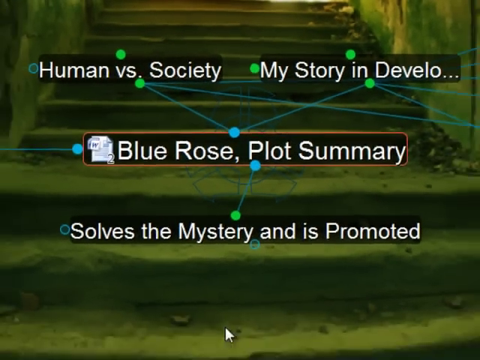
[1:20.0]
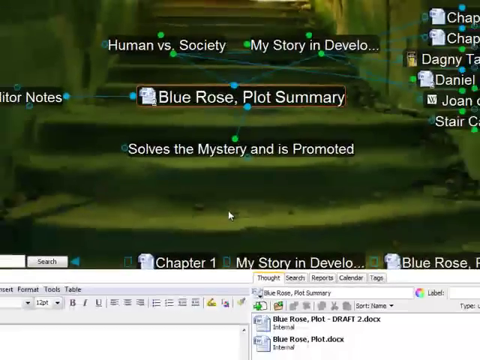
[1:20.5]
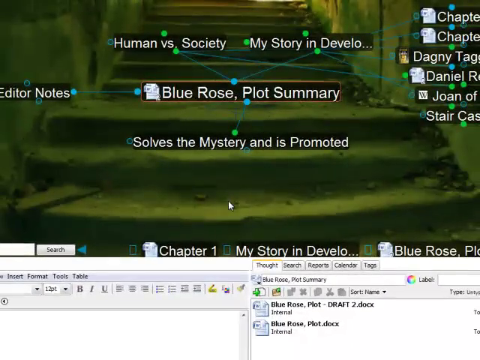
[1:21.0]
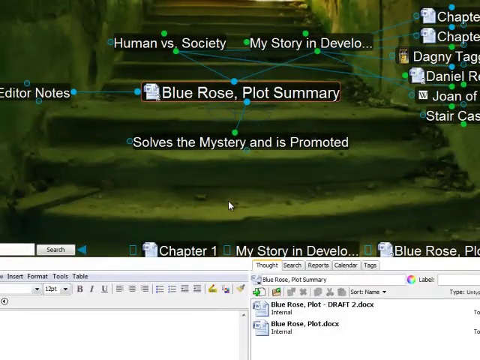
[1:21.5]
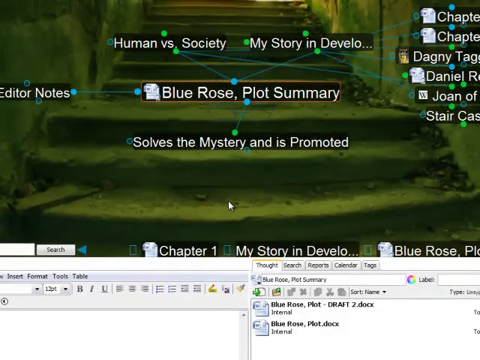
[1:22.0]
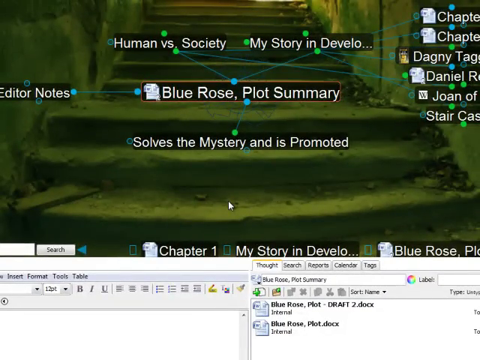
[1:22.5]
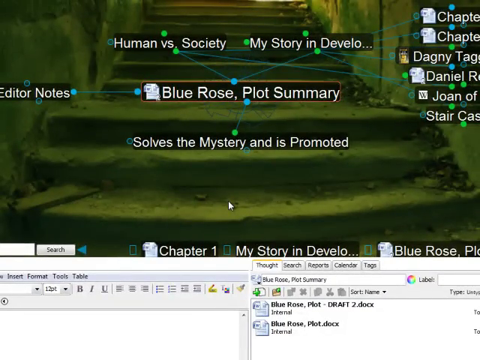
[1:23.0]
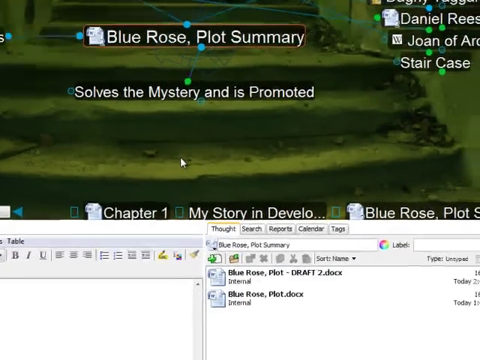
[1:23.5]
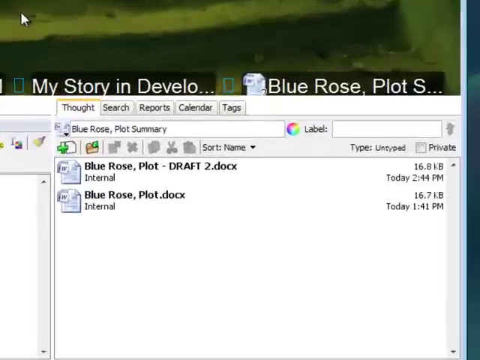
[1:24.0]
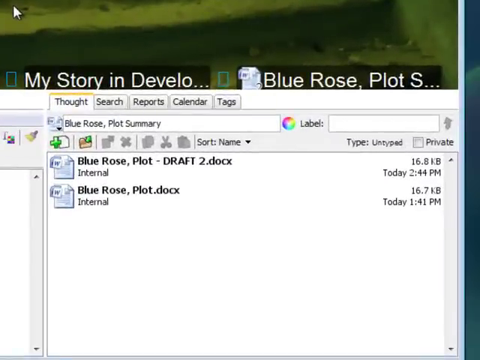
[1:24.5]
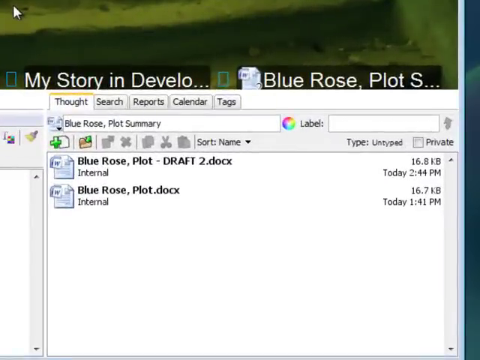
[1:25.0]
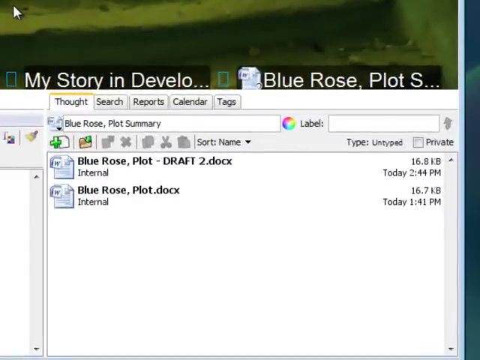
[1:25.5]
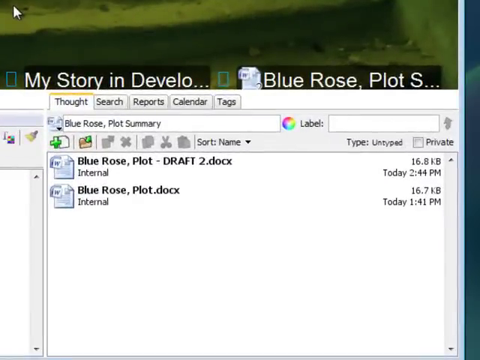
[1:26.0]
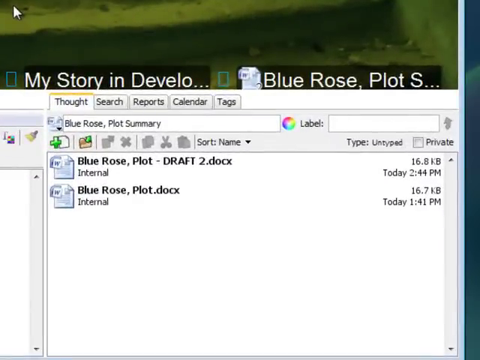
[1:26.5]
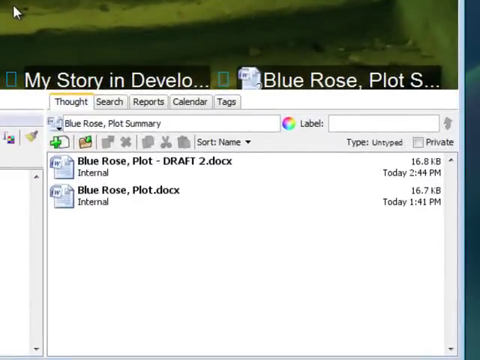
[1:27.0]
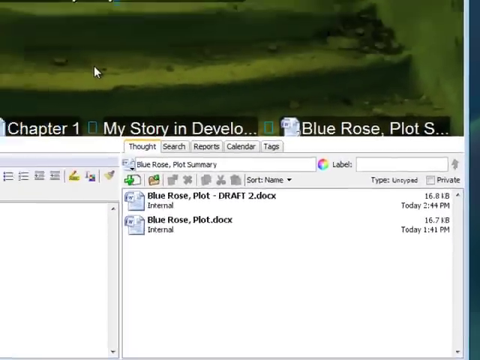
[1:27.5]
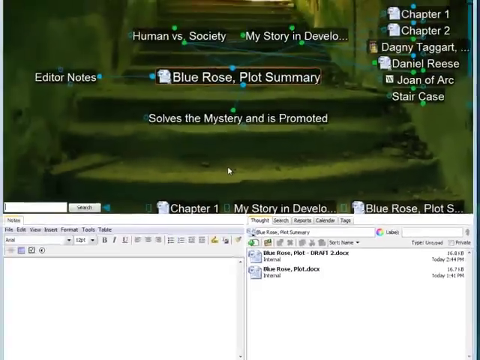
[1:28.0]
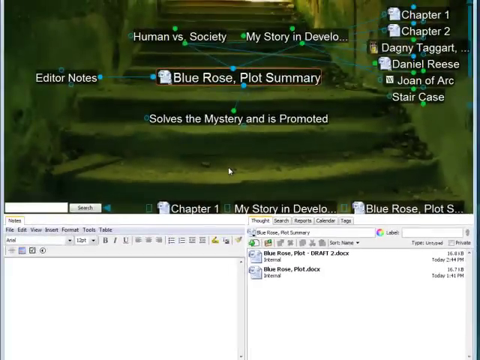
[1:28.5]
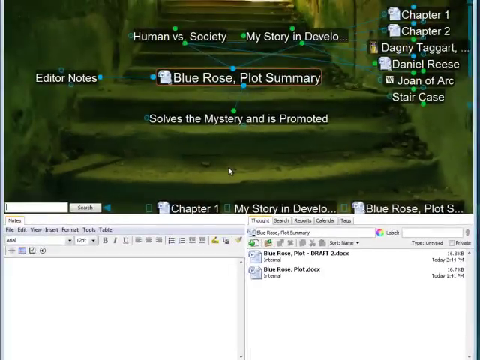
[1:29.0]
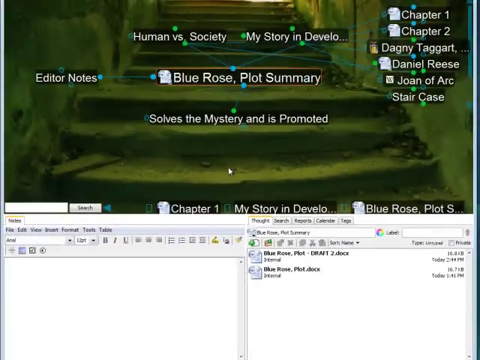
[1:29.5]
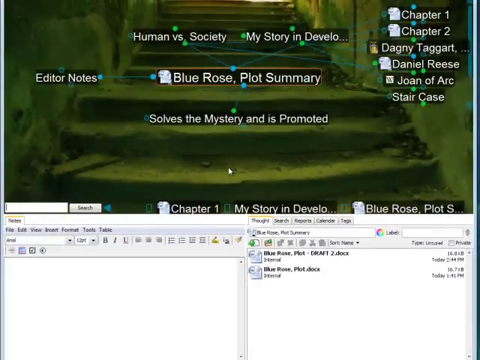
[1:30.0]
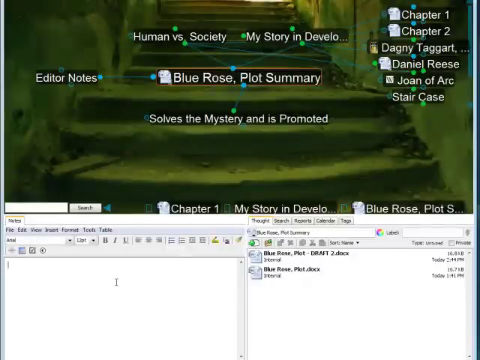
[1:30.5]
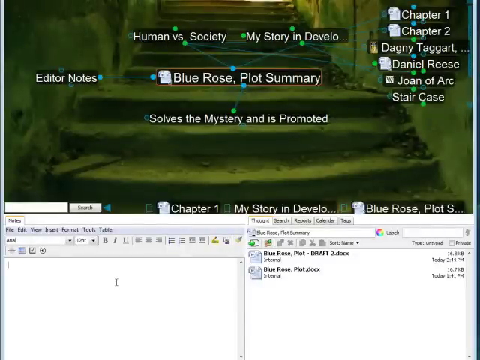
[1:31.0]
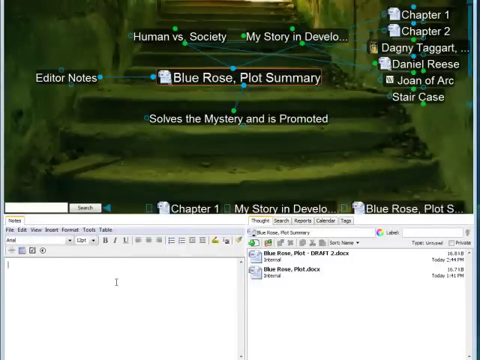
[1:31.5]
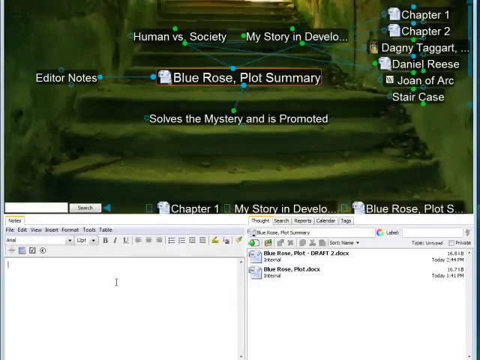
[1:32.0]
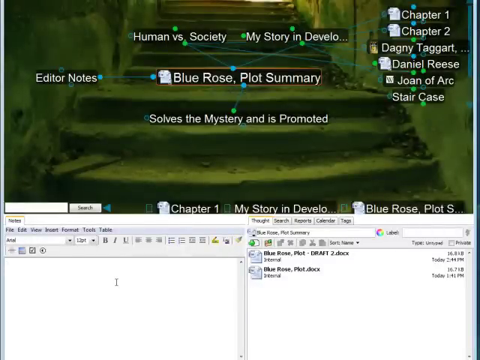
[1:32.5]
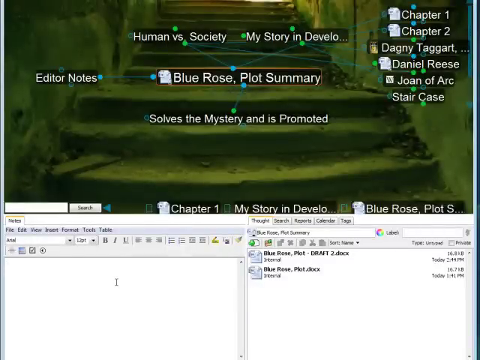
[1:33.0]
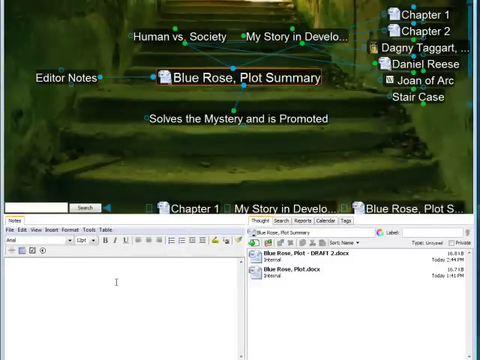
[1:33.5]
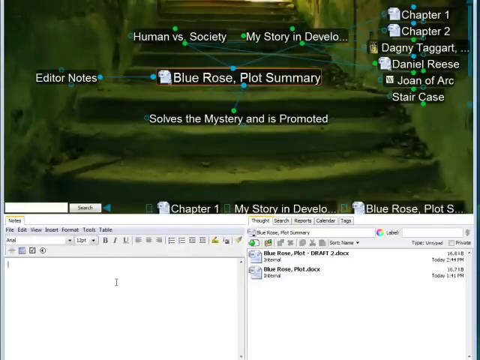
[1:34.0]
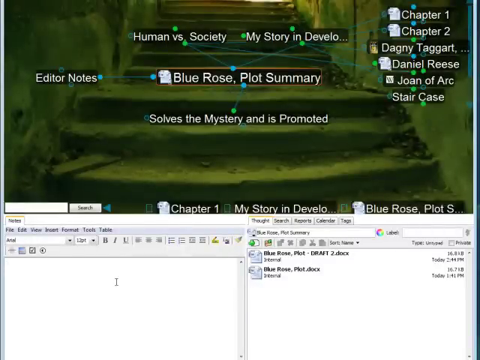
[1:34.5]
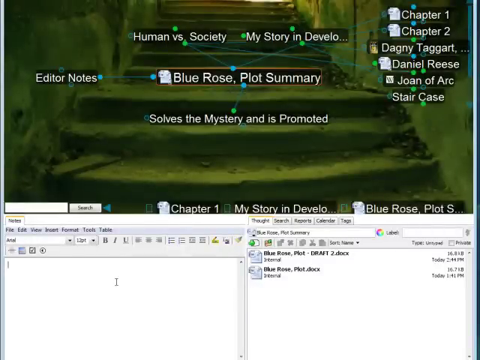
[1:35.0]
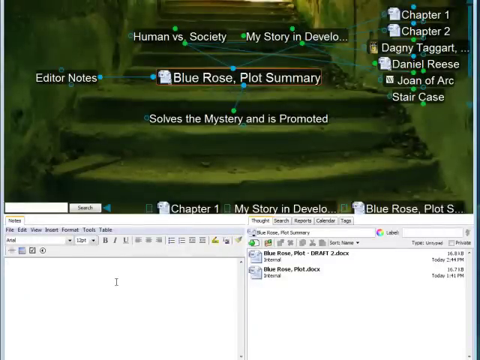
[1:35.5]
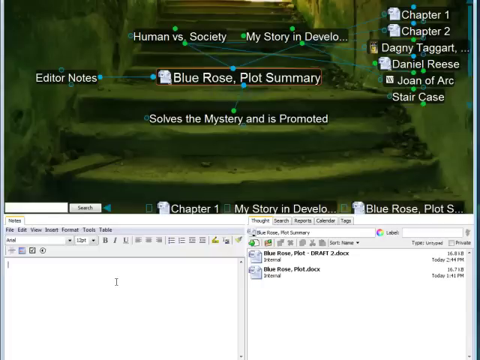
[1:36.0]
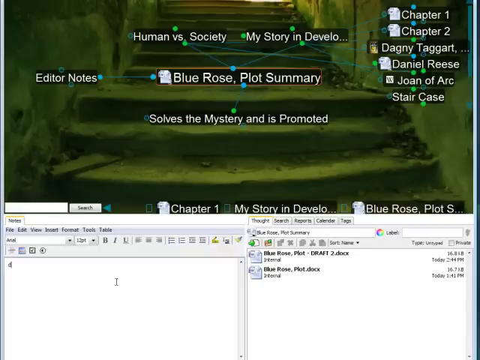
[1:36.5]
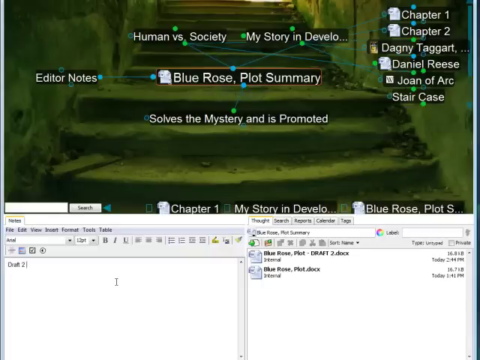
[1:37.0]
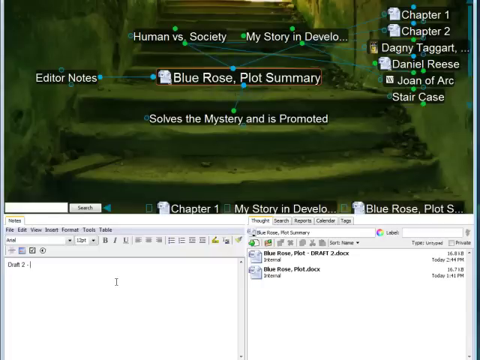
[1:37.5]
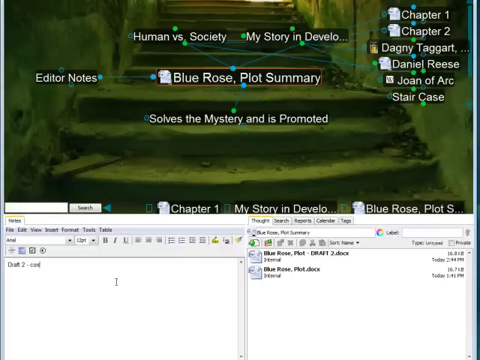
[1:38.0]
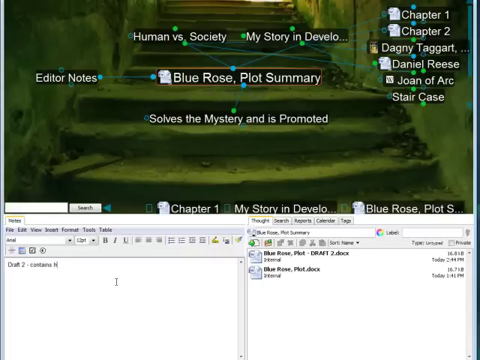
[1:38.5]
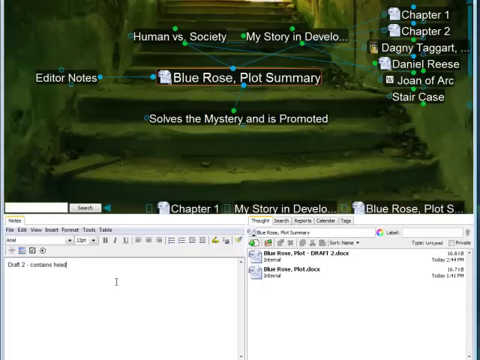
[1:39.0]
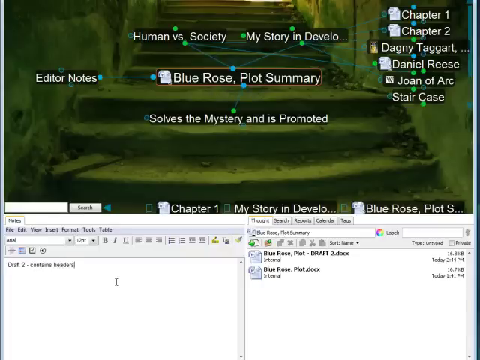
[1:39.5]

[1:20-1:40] The view zooms out, zooms in on the left, zooms out again, and zooms in on the right, showing tabs such as thought, search, report, calendar, and text. Zoomed in, different file options appear, including add new files, typed and untyped, private, and labels. Two files are listed, named Rose plot draft and Blue Rose plot. The files show different saved or created dates and times, different types, and sizes in KB.